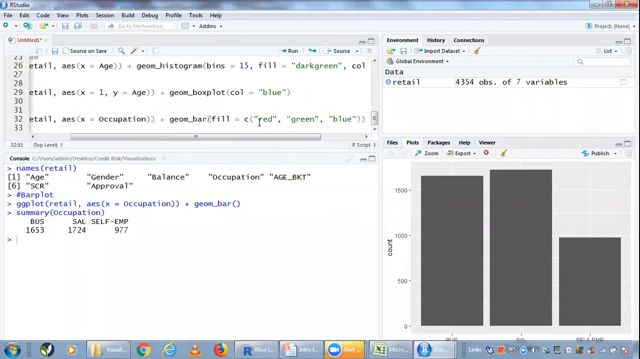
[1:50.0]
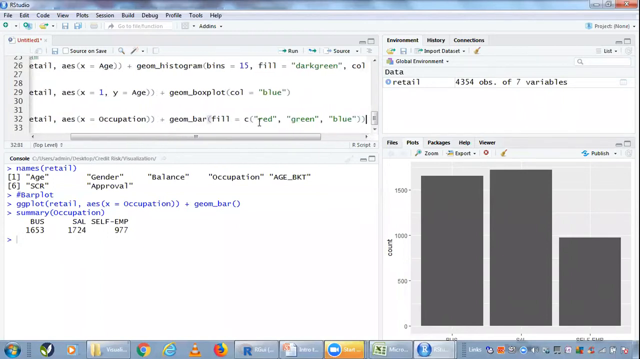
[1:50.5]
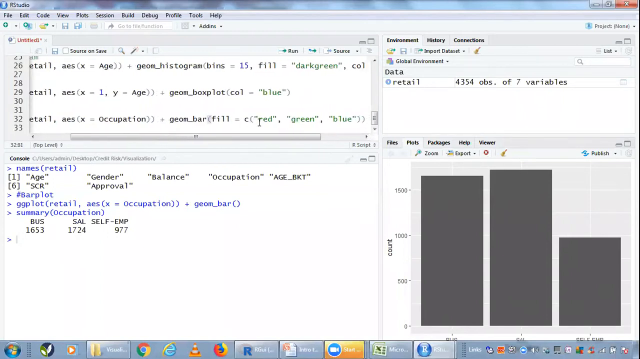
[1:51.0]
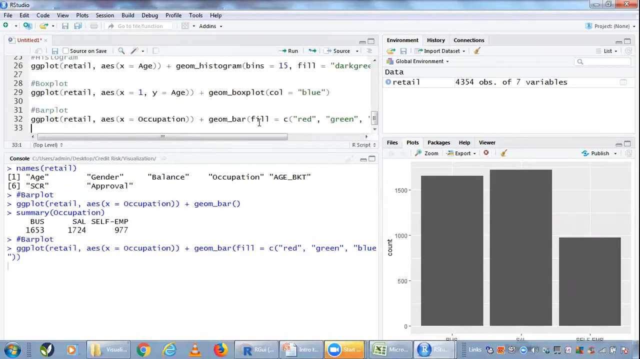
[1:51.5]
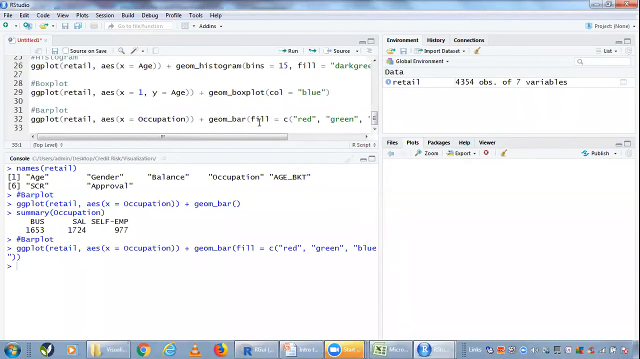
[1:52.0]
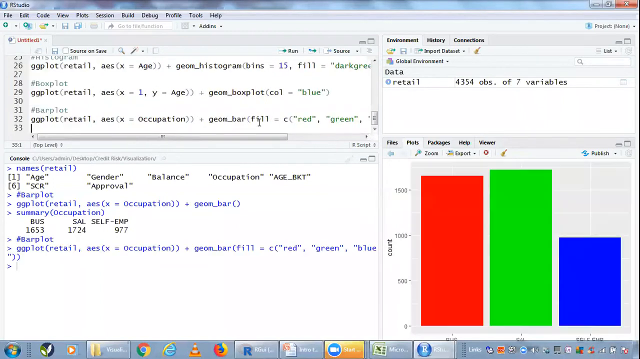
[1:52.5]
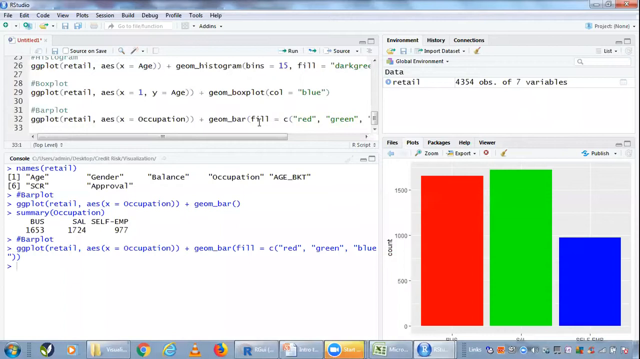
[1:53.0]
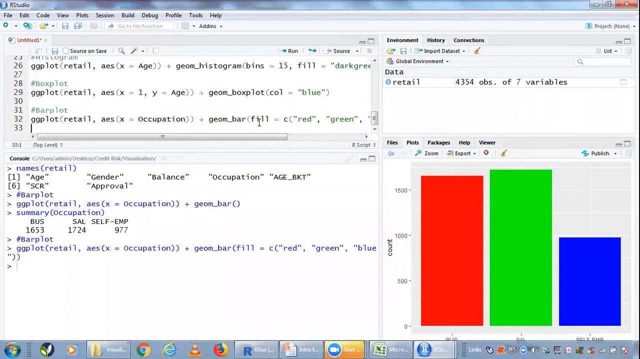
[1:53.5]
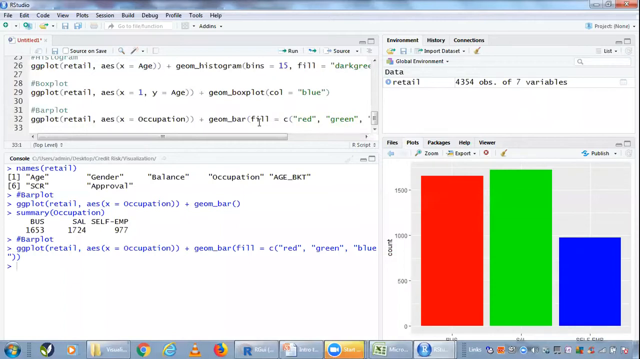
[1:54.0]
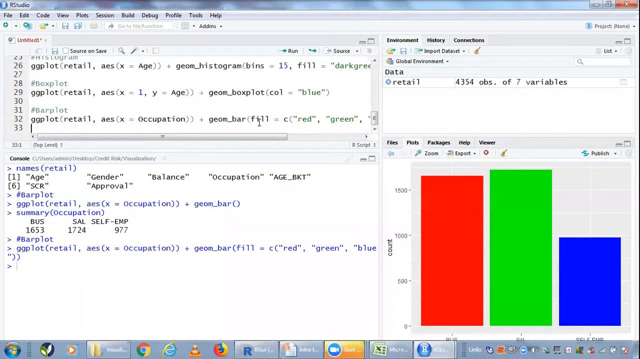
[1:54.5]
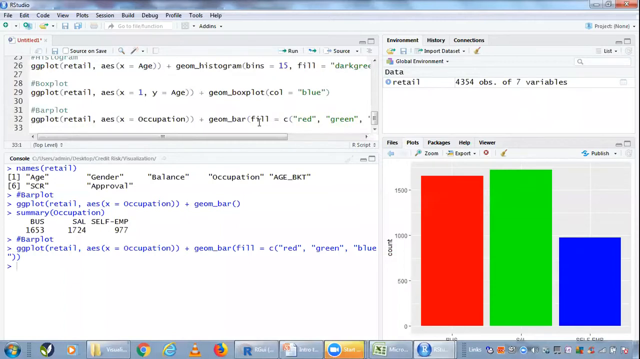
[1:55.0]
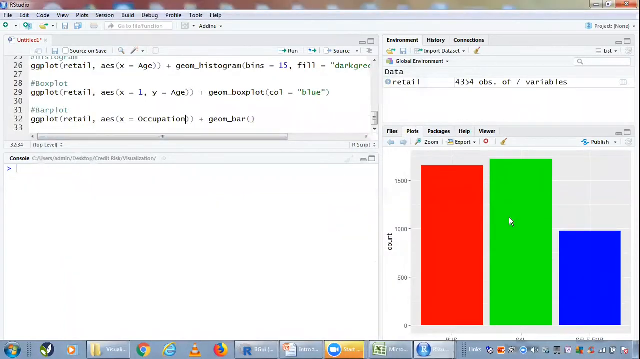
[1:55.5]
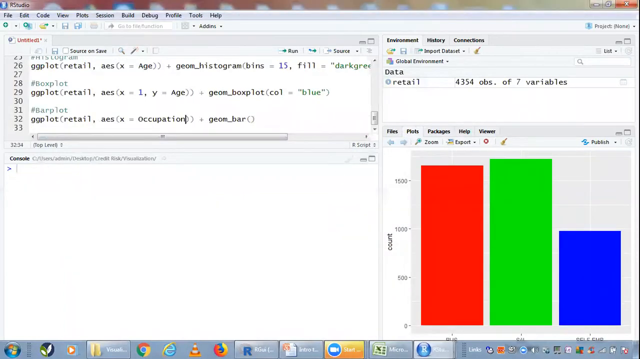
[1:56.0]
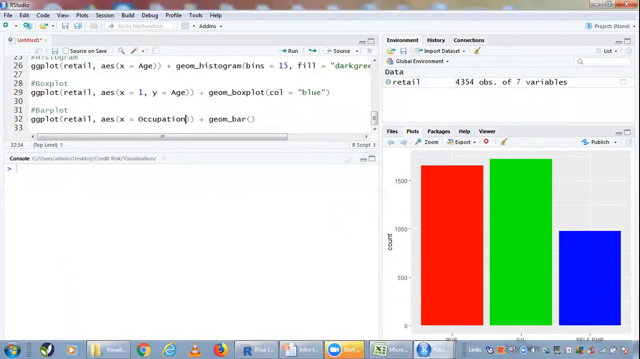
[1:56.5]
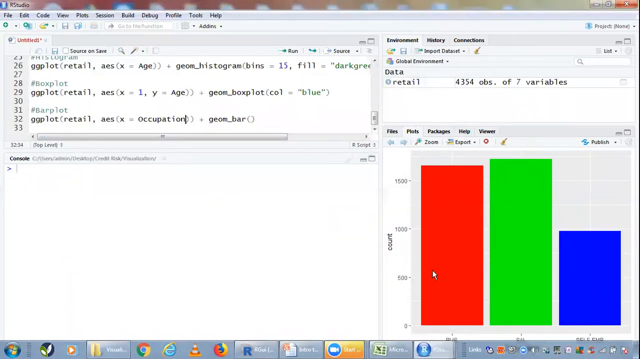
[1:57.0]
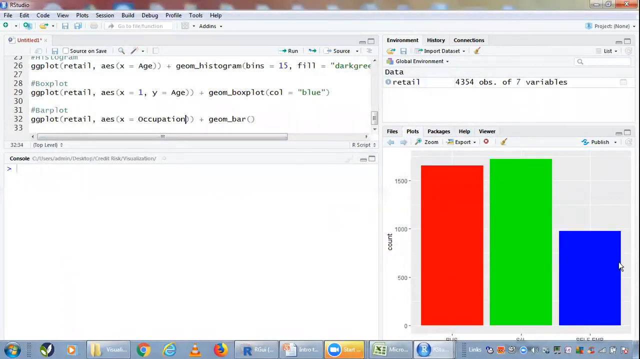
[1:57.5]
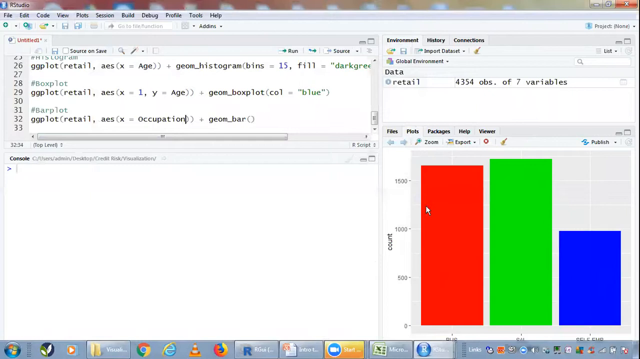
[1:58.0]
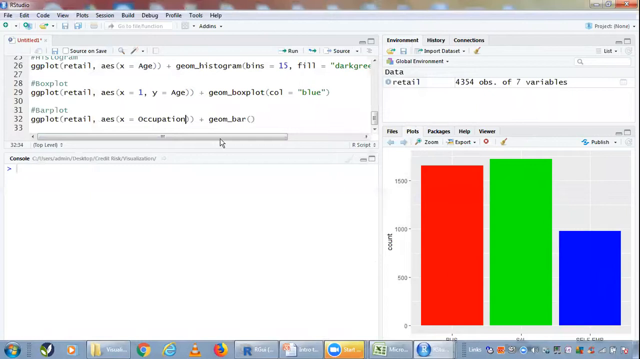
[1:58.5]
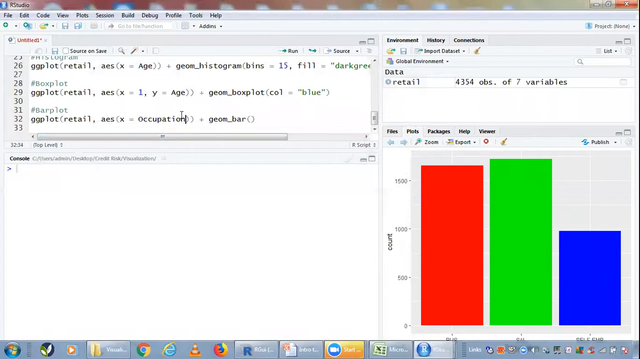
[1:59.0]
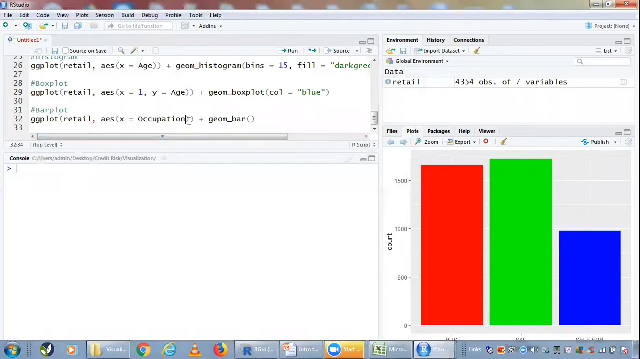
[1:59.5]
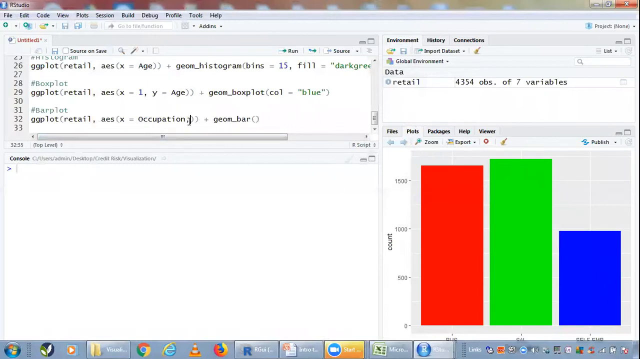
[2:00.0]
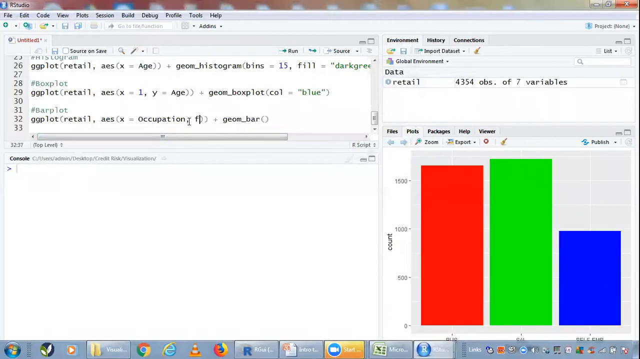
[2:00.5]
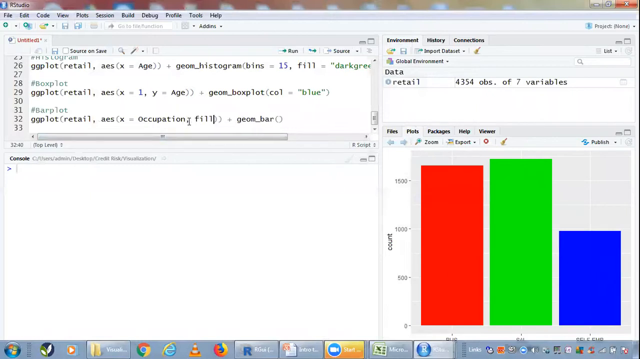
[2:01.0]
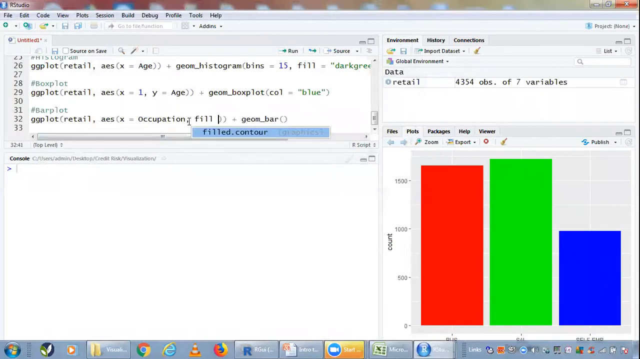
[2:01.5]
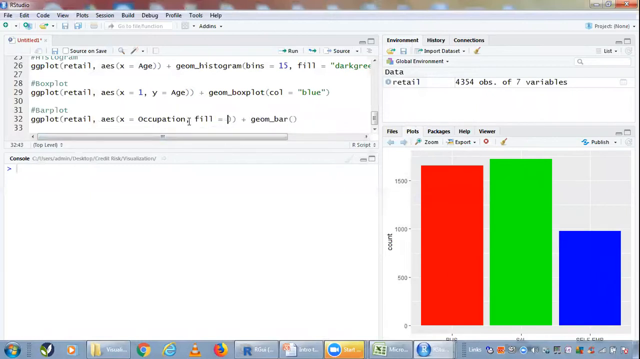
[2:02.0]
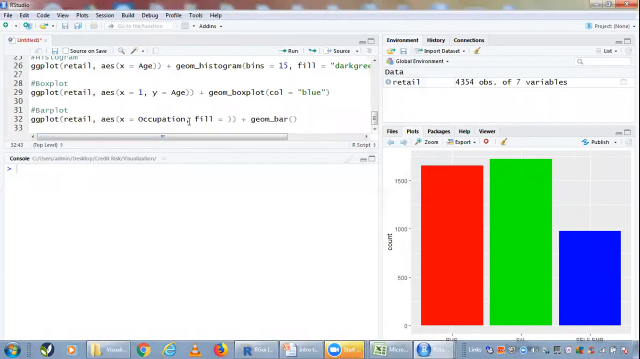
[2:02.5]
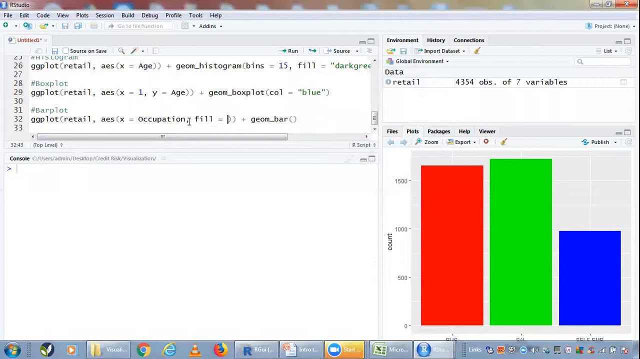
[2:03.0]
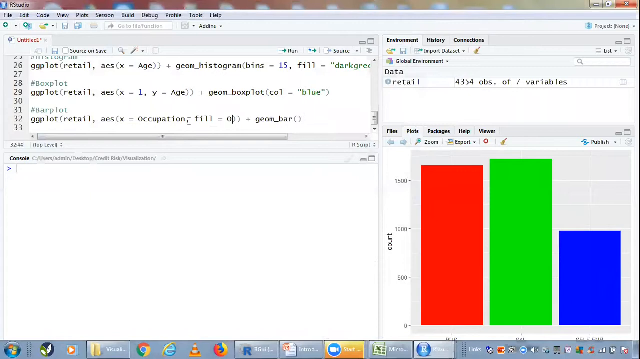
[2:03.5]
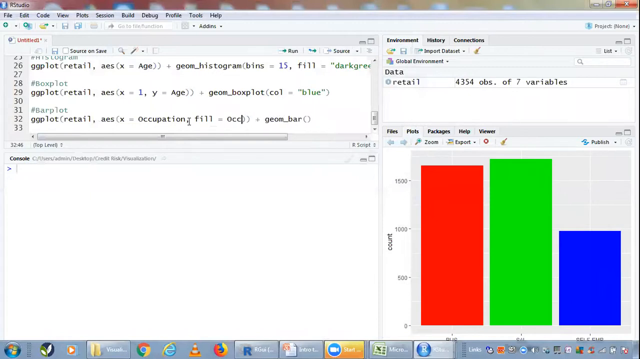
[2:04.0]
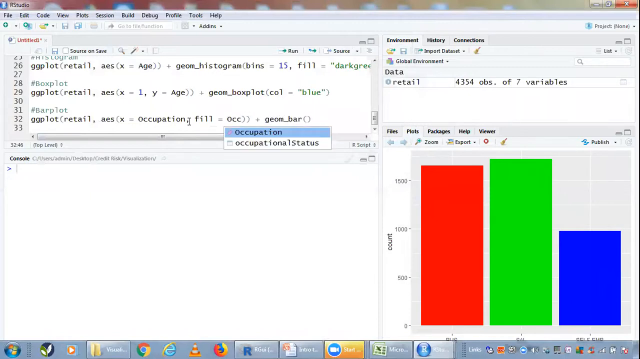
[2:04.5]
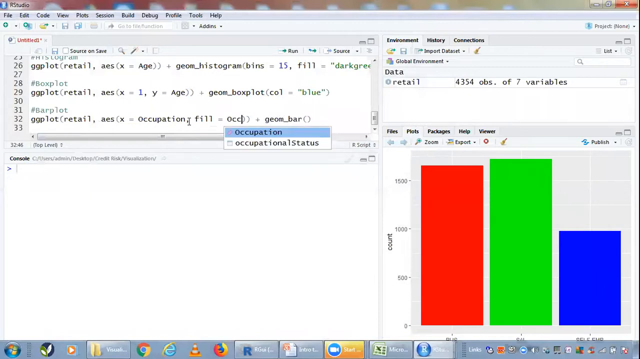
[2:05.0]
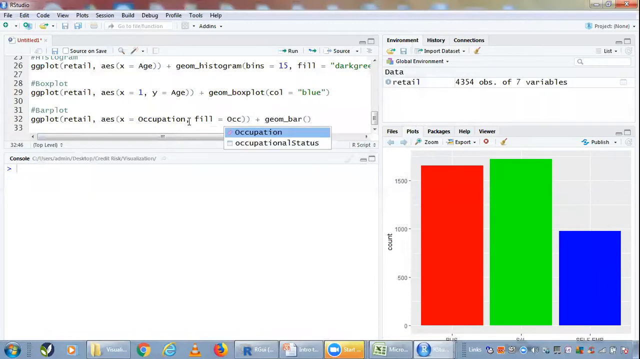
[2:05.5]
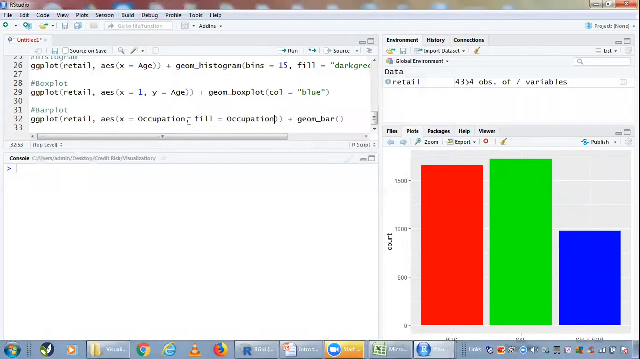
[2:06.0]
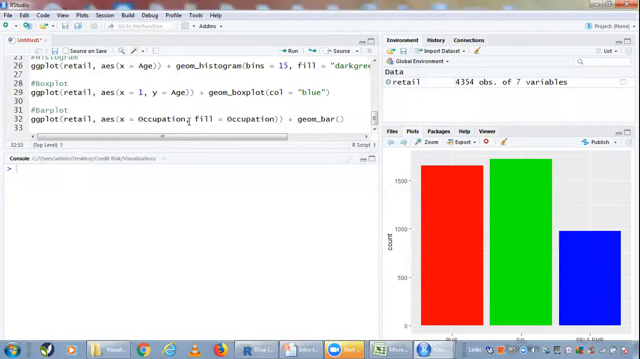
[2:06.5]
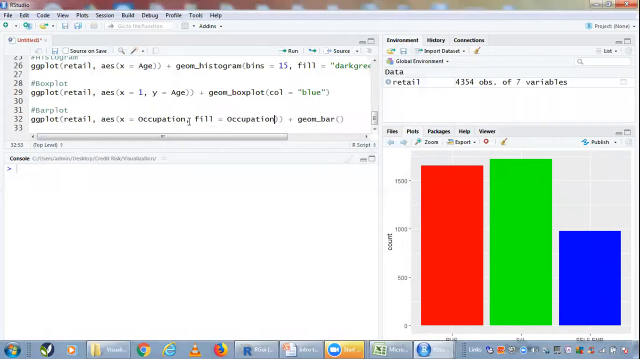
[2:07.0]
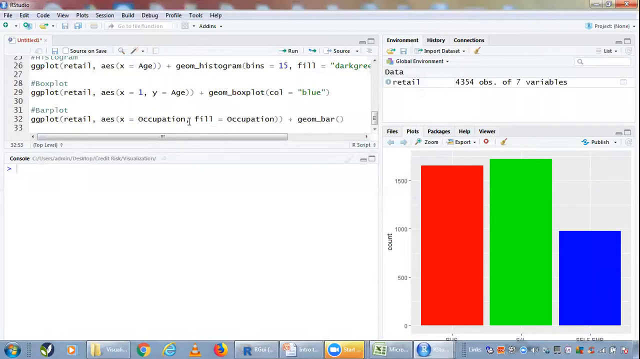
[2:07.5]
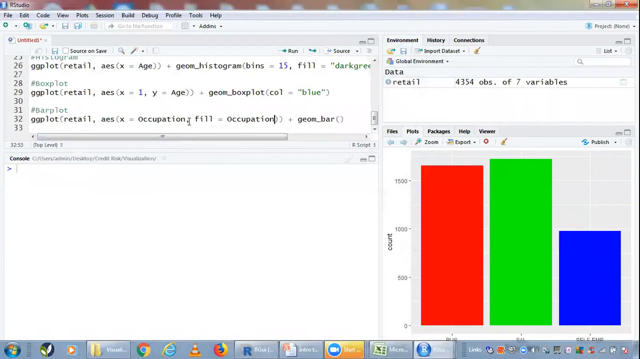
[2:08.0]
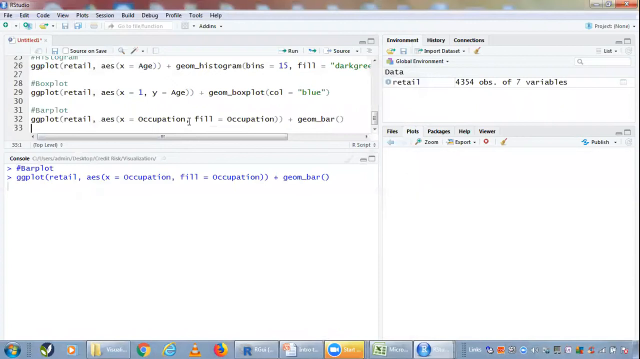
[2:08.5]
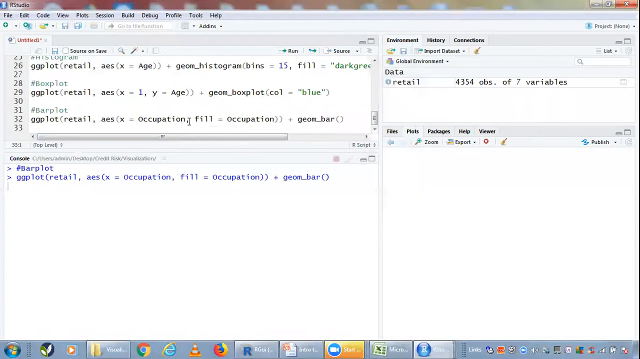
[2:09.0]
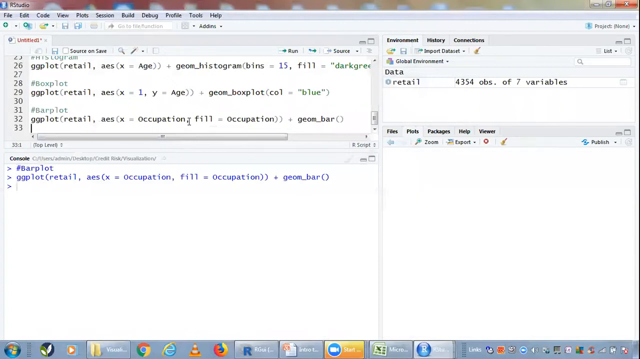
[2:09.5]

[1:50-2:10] The cursor is at the end of line 32 in the Untitled panel in the top left corner; this line seems to set the different colors for the bar plot. The user hits Enter, and in the bottom right Plots panel the bar graph changes from gray bars to a red, a green and a blue bar. The cursor then goes back to line 32, and next to the word "Occupation" the user adds a comma and writes "fill =", then "OCC". An autofill pop-up box appears with two options, "Occupation" and "OccupationalStatus"; the user clicks the first option, "Occupation", which is added to the code. They hit enter, and the text in the bottom console panel changes to reflect the added "fill = occupation". The colors on the bar chart in the plots panel change again: Bus is now pink, Sal is green, and Self-emp is blue.